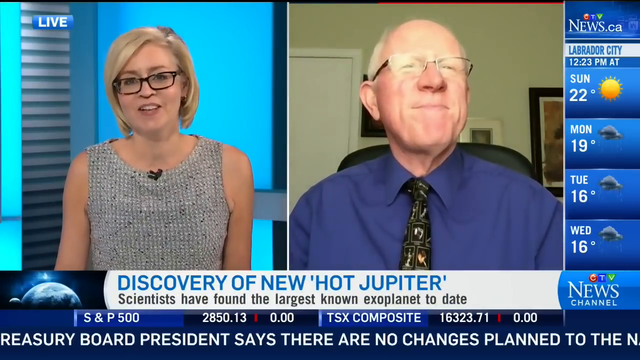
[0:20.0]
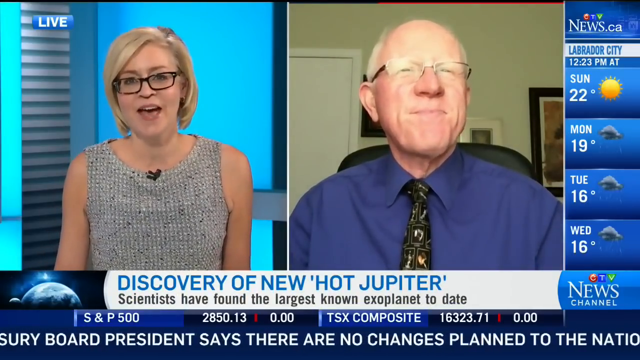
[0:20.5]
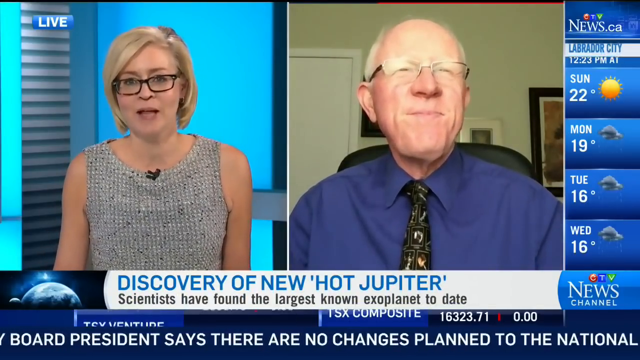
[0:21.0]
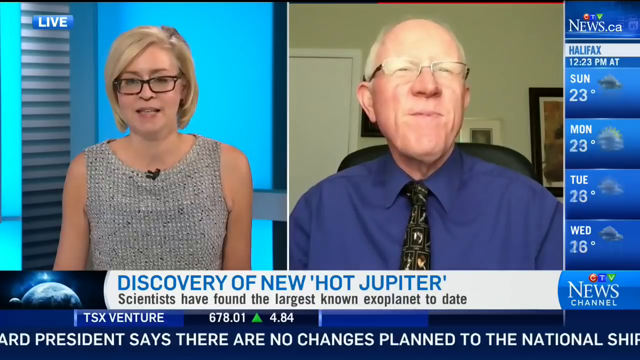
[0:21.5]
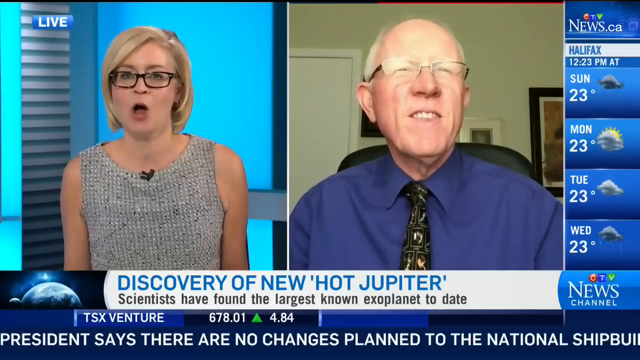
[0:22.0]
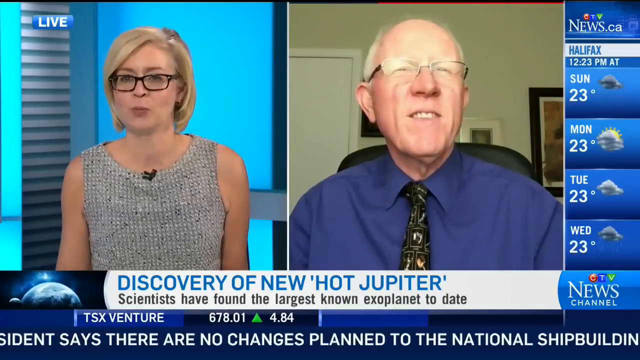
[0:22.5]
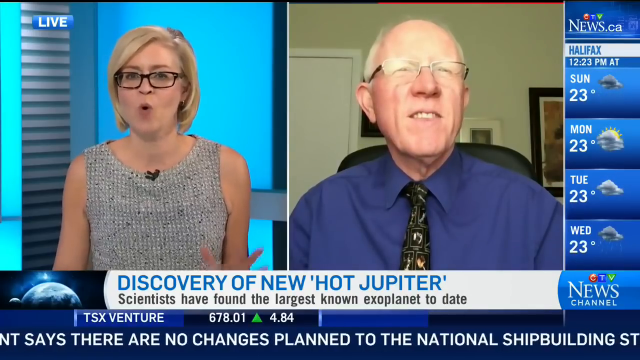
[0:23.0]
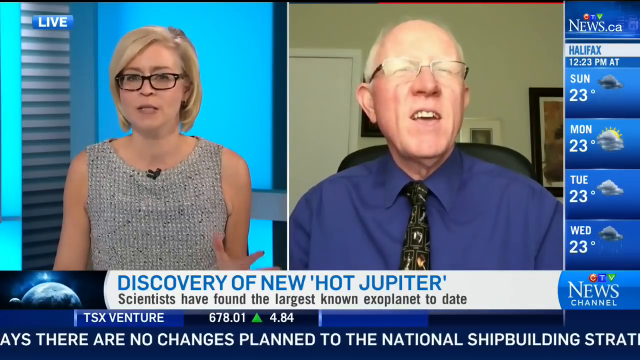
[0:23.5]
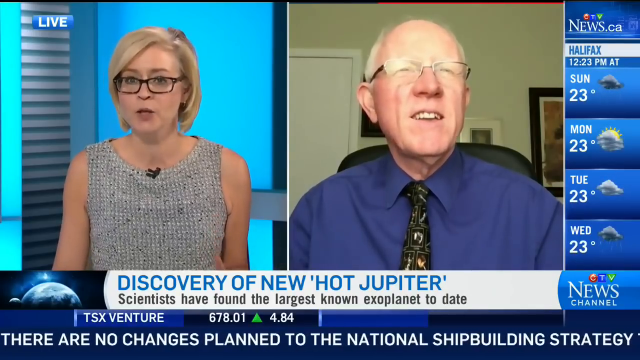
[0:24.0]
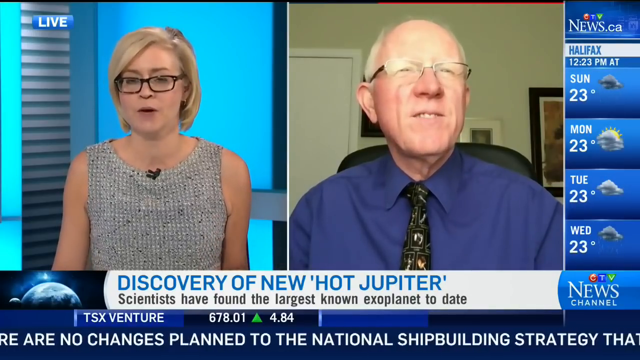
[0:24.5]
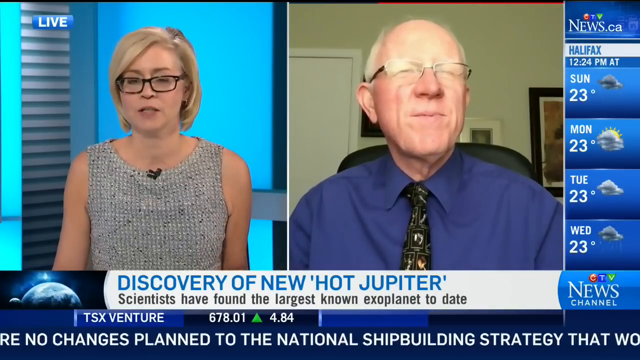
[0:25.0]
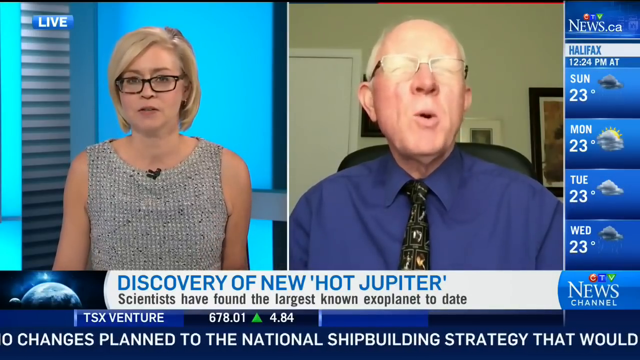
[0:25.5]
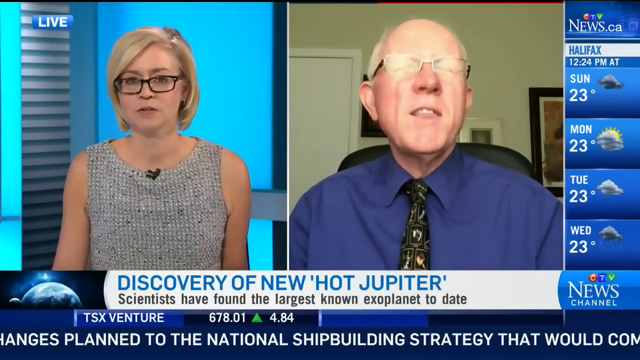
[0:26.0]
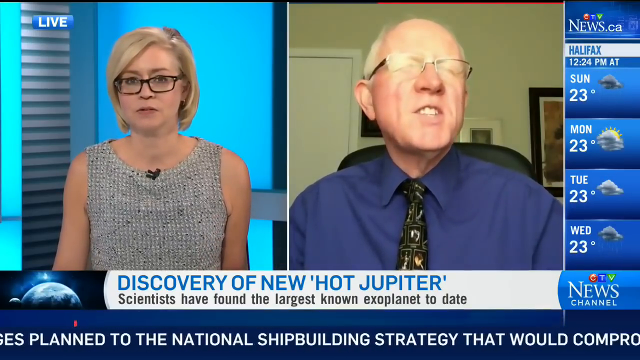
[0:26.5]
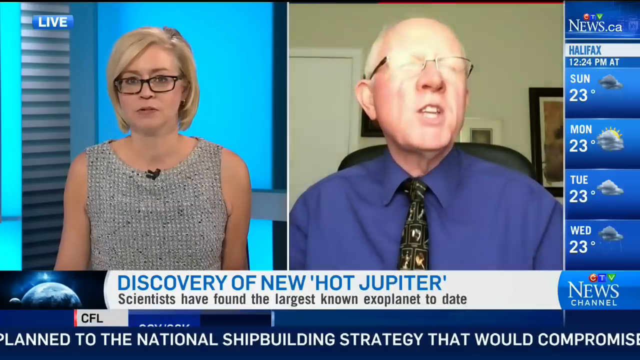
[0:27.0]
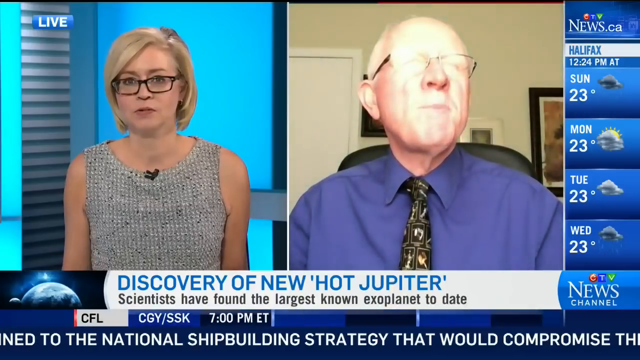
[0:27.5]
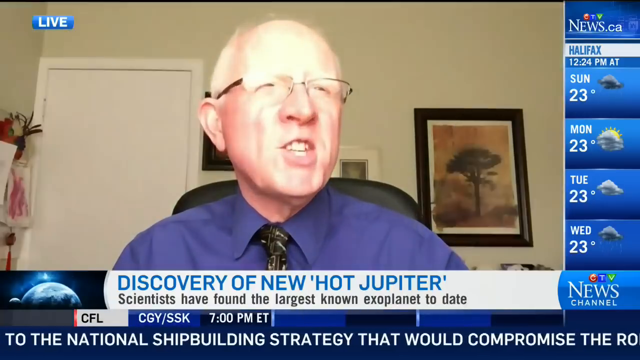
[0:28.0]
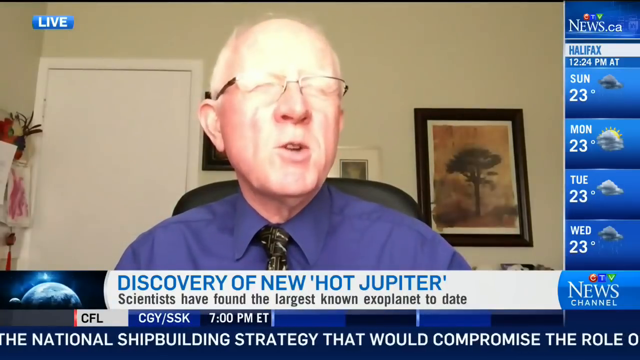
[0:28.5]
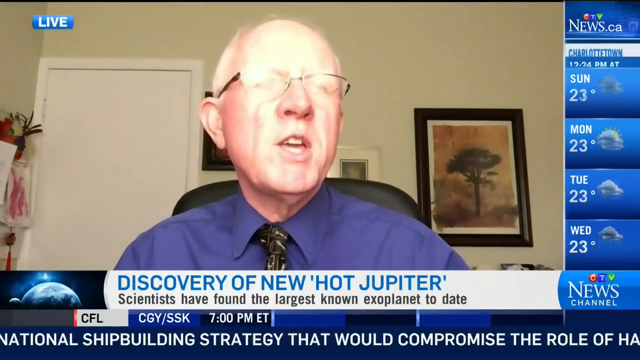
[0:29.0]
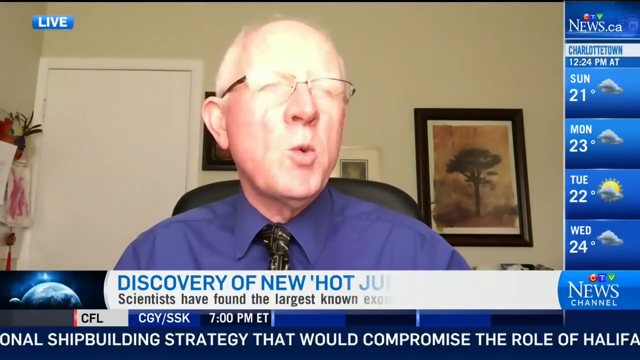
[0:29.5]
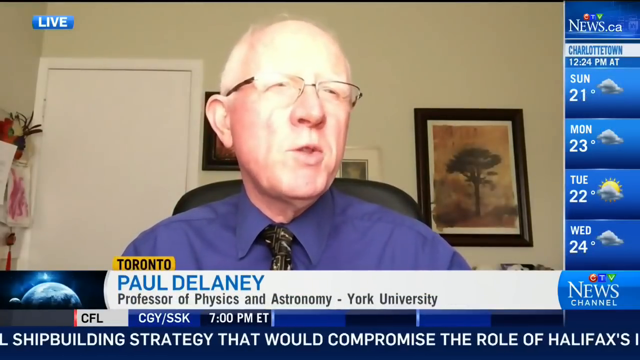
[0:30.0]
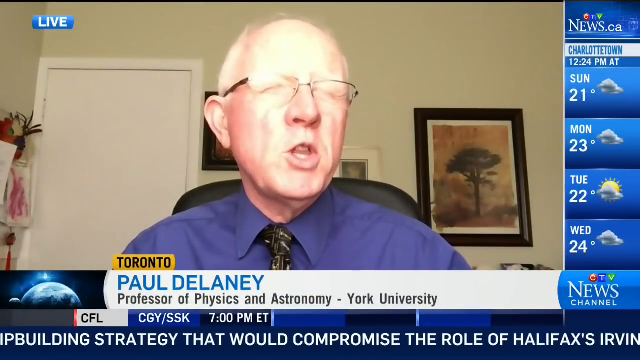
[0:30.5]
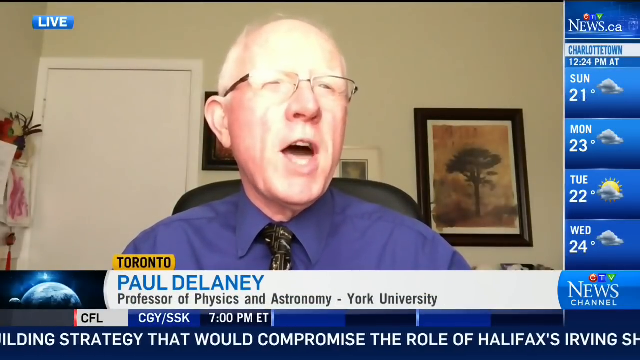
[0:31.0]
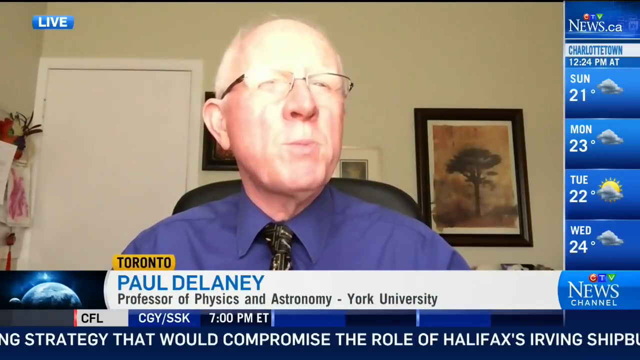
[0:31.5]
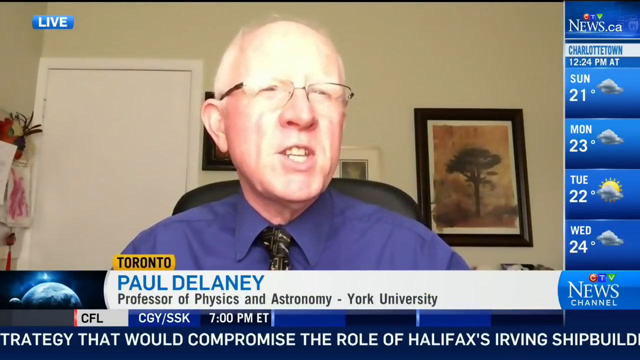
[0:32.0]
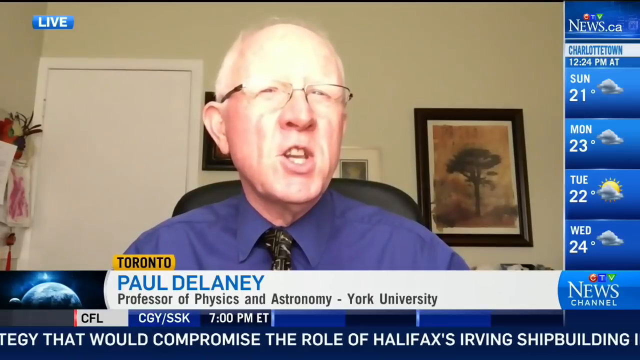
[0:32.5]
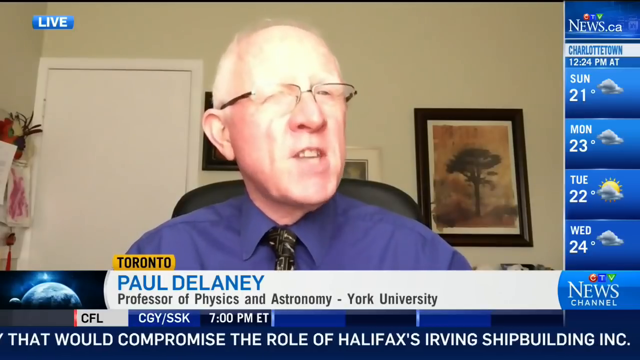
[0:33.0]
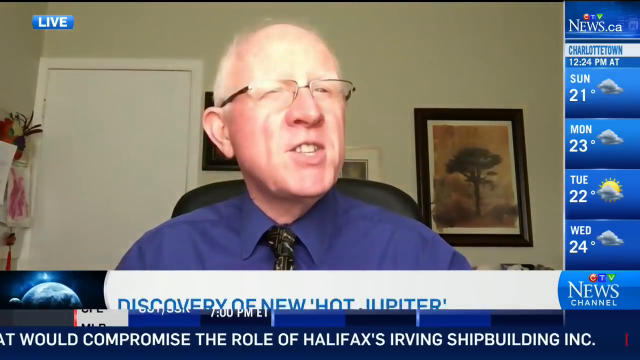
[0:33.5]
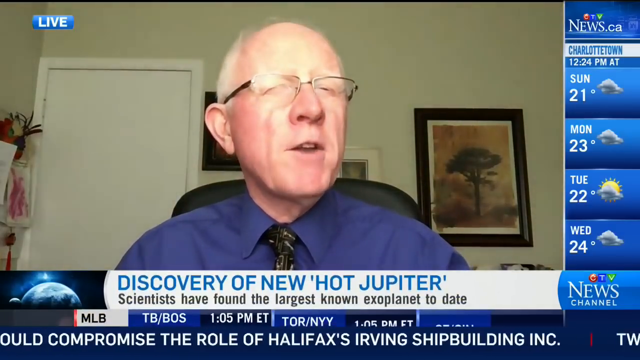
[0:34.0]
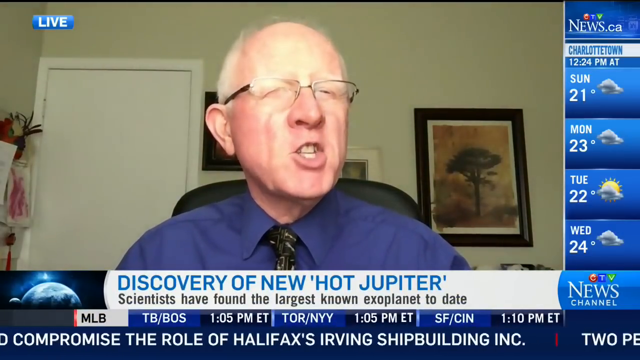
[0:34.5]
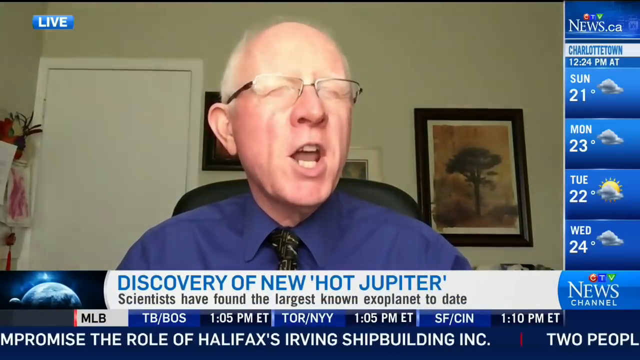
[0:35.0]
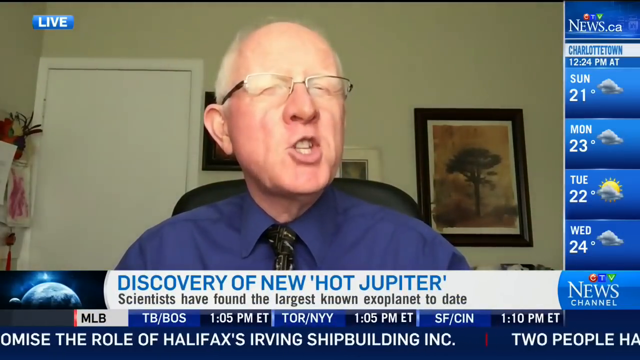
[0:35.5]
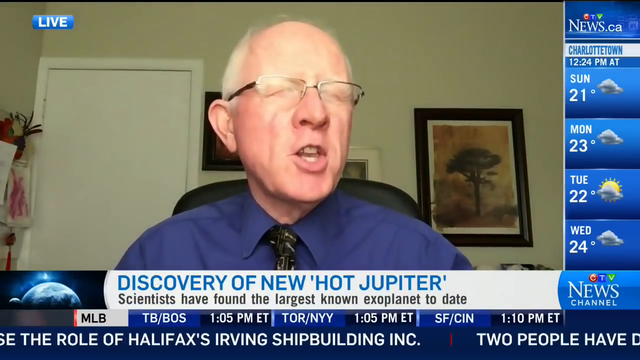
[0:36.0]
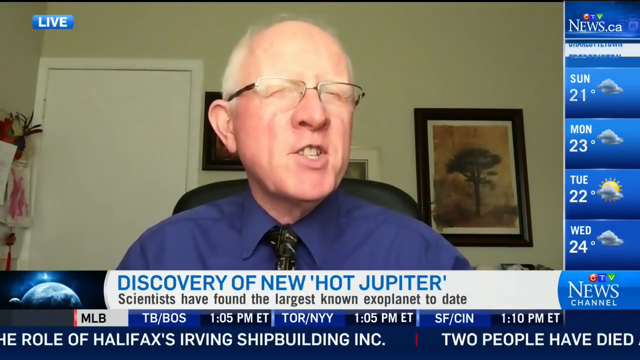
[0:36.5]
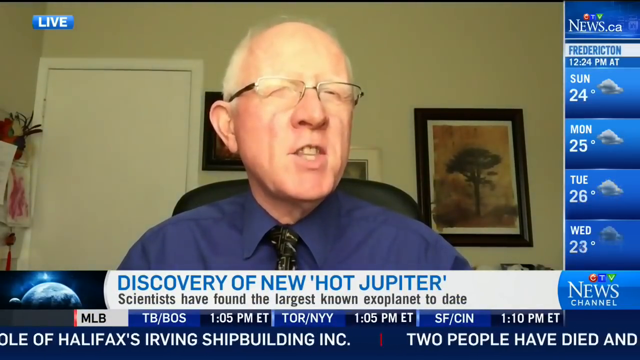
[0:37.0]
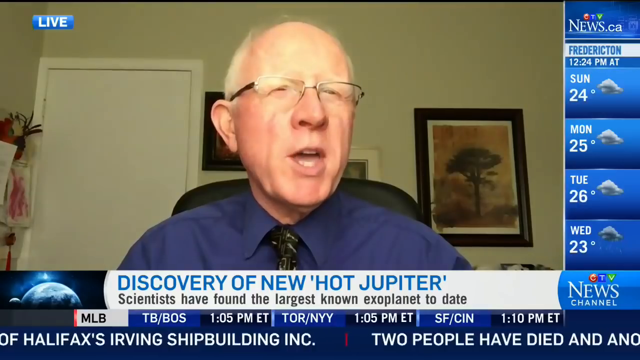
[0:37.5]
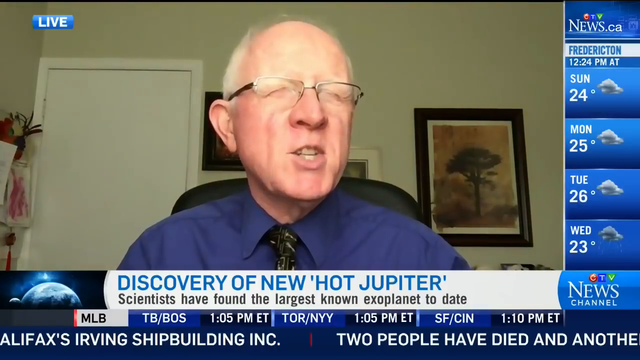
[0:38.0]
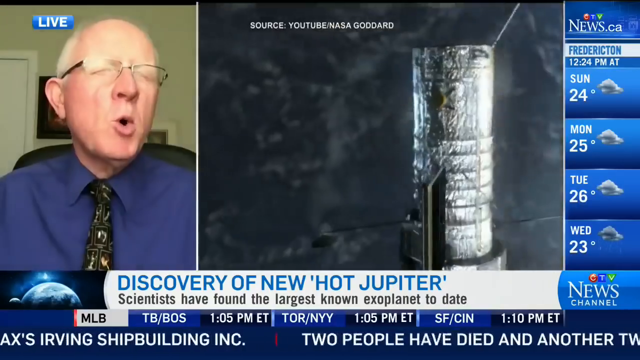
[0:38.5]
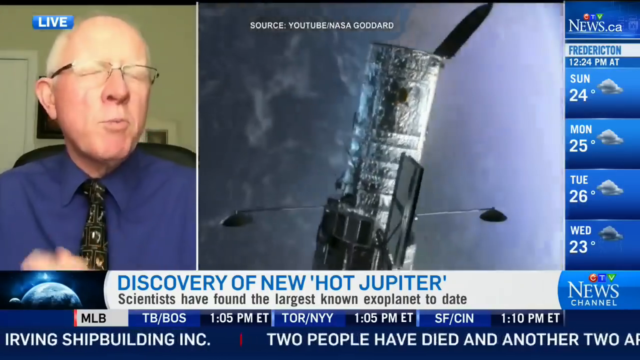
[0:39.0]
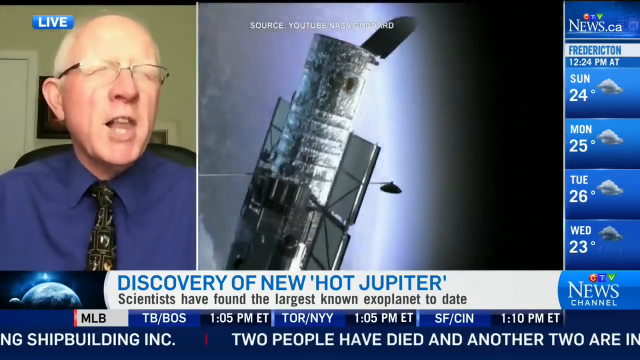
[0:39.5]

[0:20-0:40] On CTV News Channel, a news item reports that the Treasury Board President says there are no changes planned to the National Shipbuilding Strategy that would compromise the role of Halifax, Nova Scotia's Irving Shipbuilding Incorporated. Another item reports that two people have died and another two are in hospital. The bar on the right of the screen shows the forecast for Labrador City: 22 degrees and sunny on Sunday, cloudy and 19 degrees on Monday, cloudy and 16 degrees on Tuesday, and cloudy and 16 degrees on Wednesday. The astronomy expert is an elderly man, apparently being interviewed from his own house. Paintings and prints are directly behind him, and there is a white door over his right shoulder. He wears a navy blue shirt, a patterned tie and glasses, and has thin white hair. He is Paul Delaney, professor of physics and astronomy at York University, Toronto.